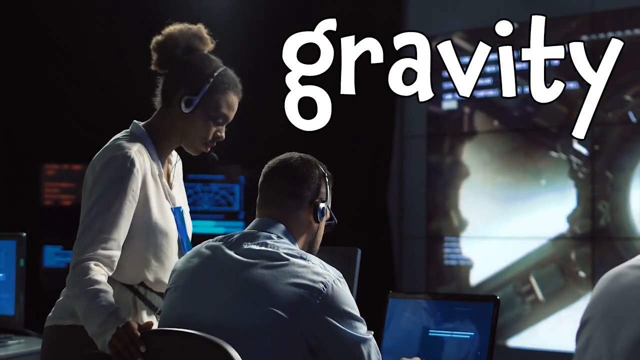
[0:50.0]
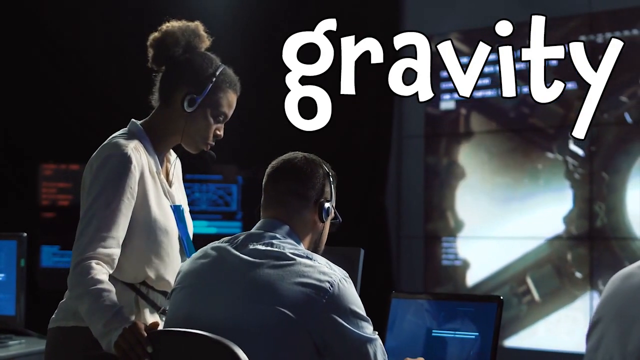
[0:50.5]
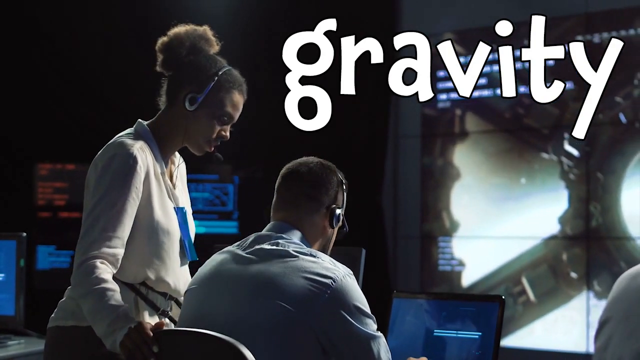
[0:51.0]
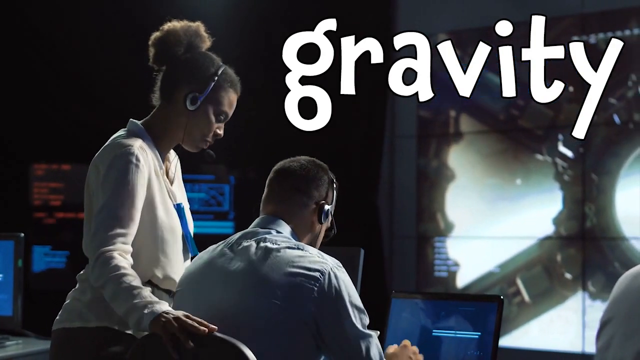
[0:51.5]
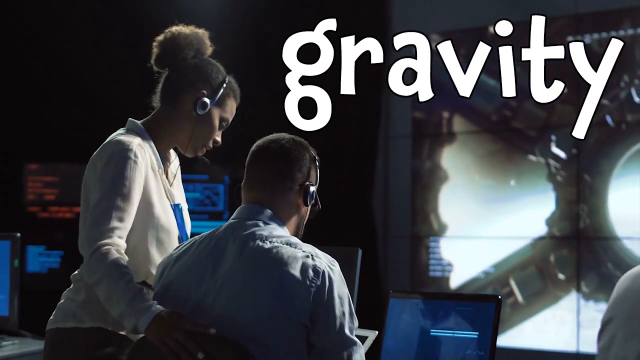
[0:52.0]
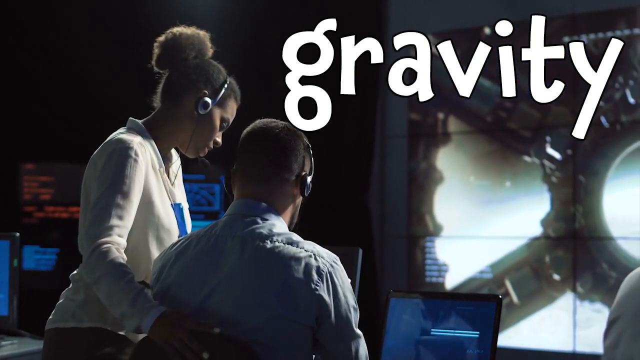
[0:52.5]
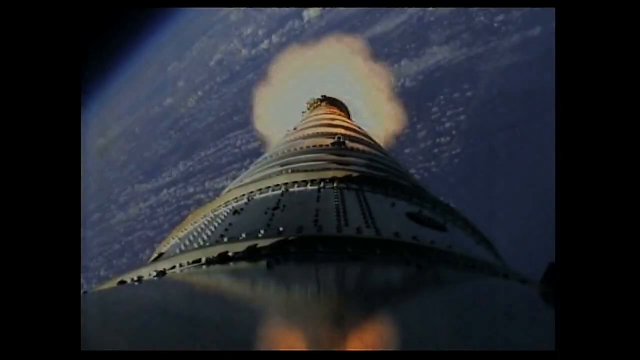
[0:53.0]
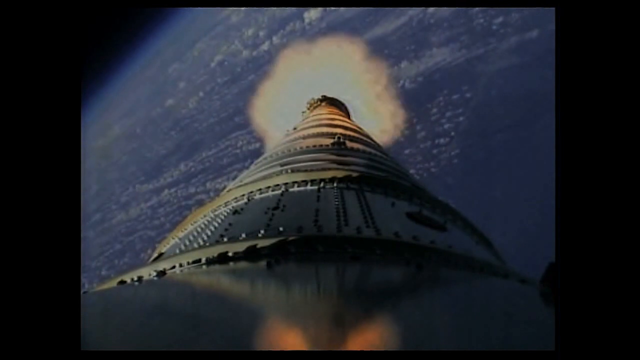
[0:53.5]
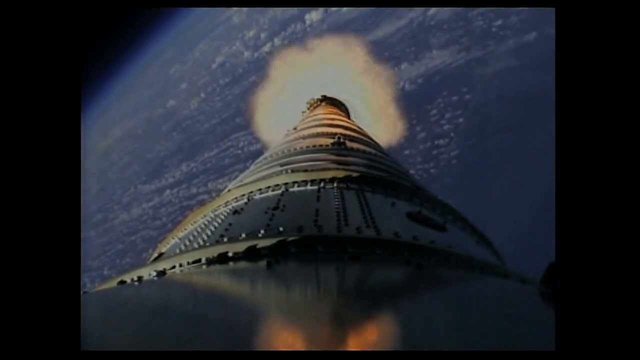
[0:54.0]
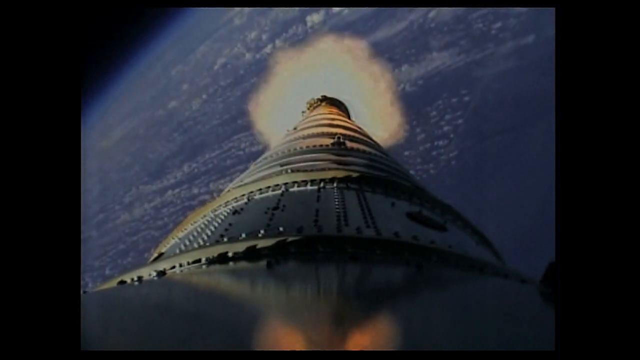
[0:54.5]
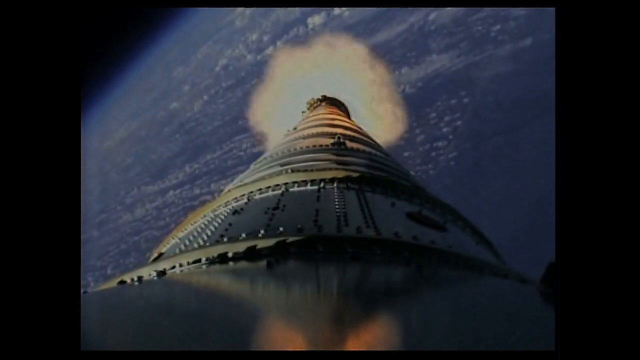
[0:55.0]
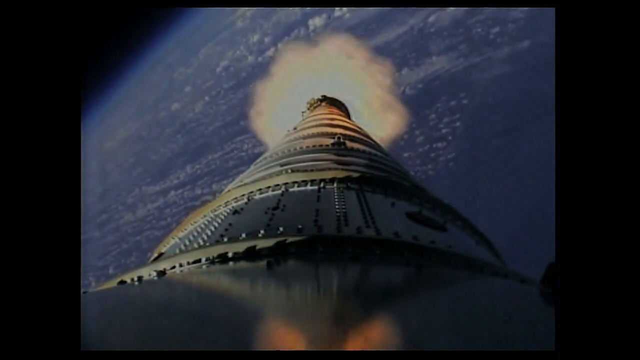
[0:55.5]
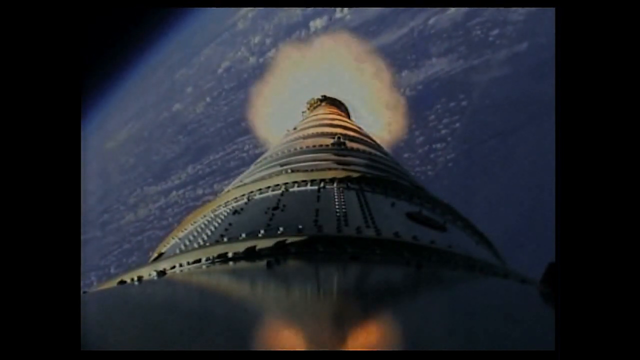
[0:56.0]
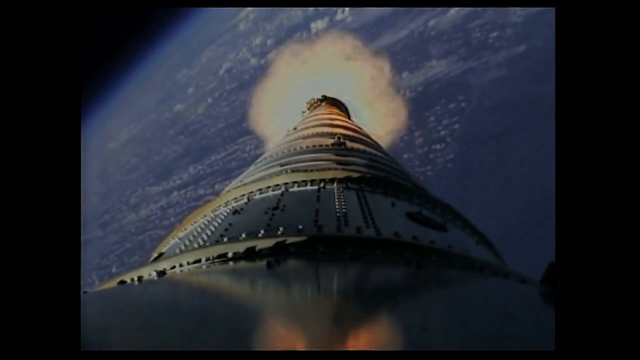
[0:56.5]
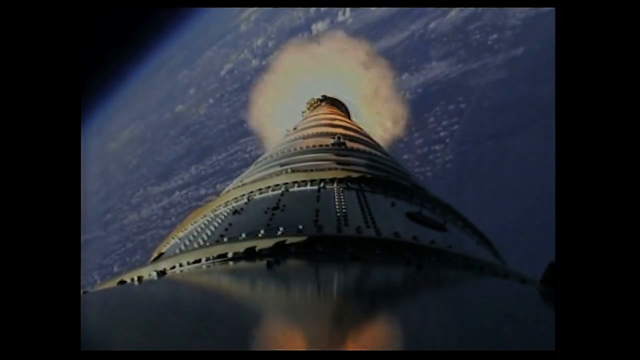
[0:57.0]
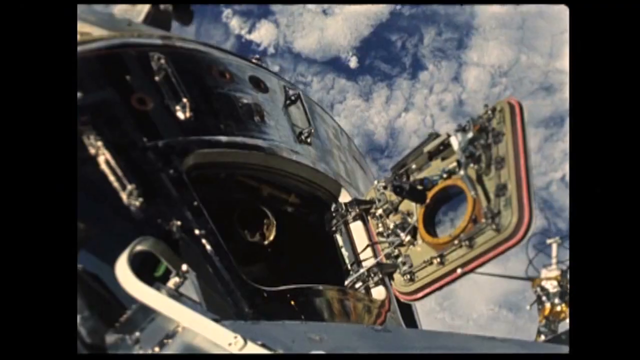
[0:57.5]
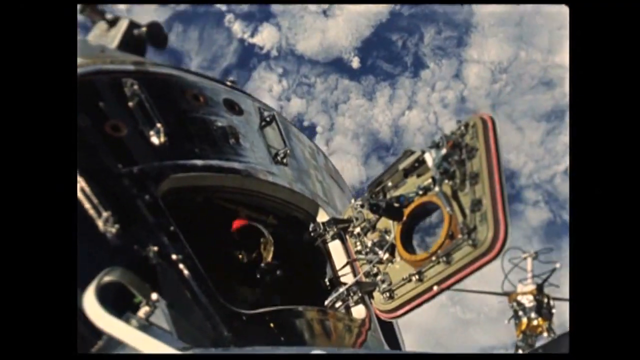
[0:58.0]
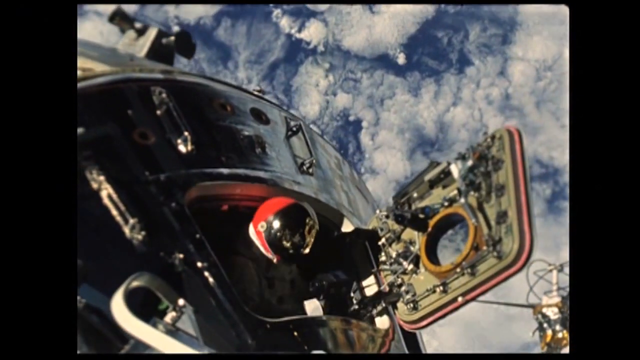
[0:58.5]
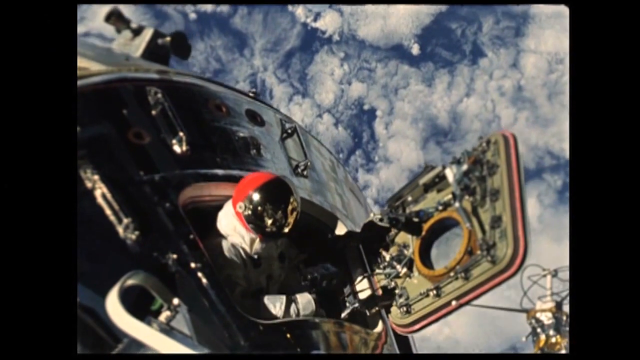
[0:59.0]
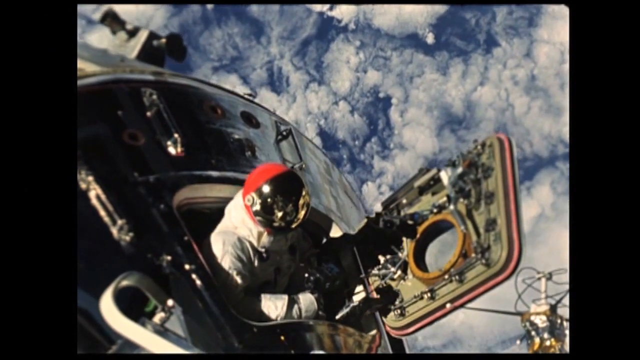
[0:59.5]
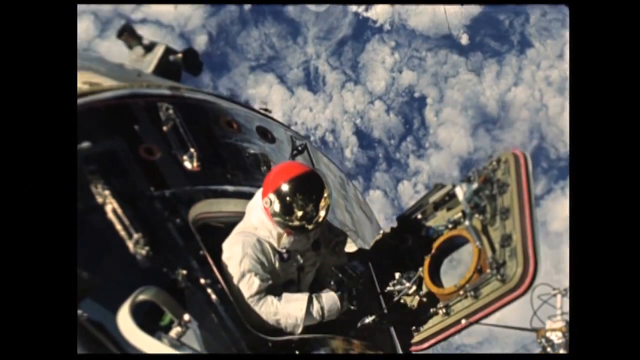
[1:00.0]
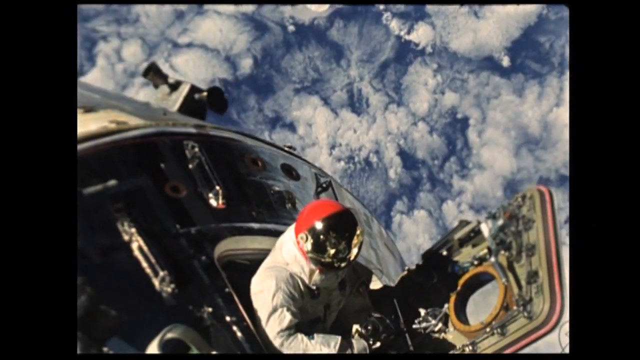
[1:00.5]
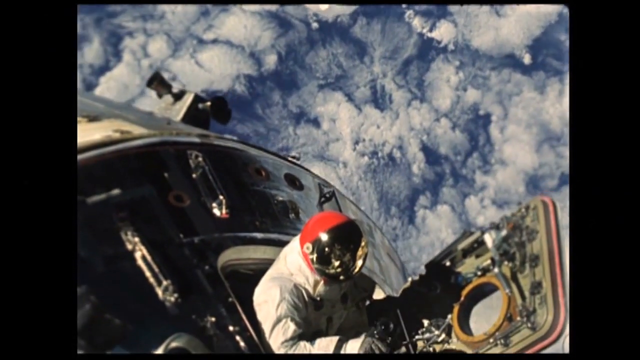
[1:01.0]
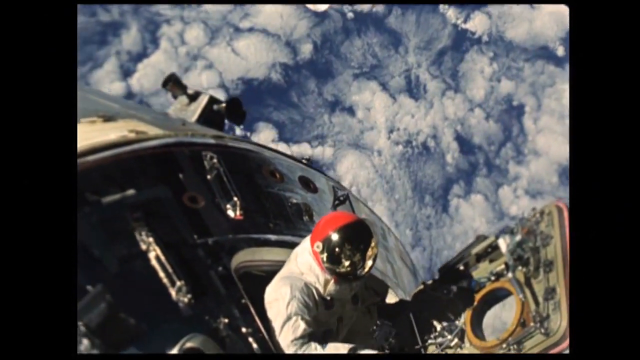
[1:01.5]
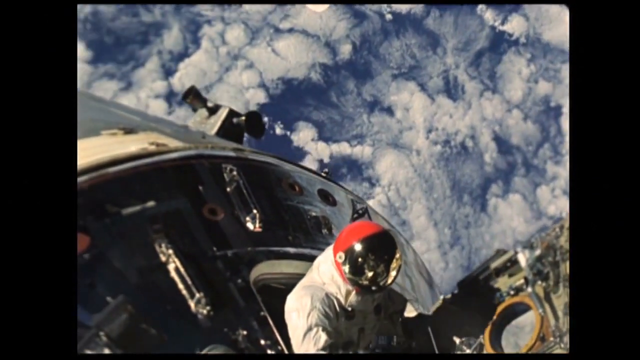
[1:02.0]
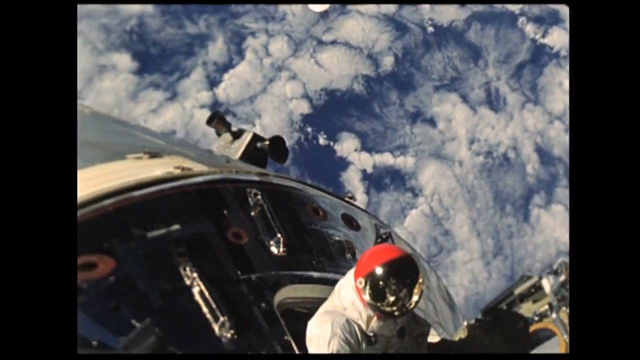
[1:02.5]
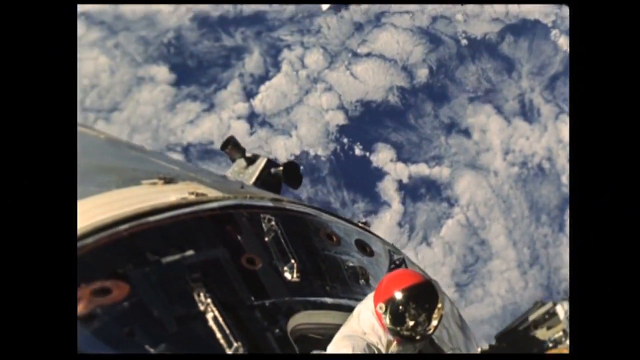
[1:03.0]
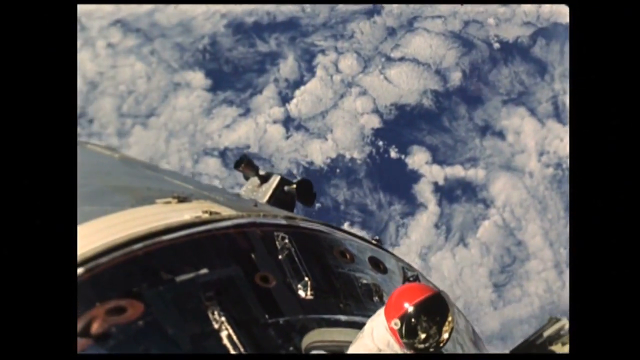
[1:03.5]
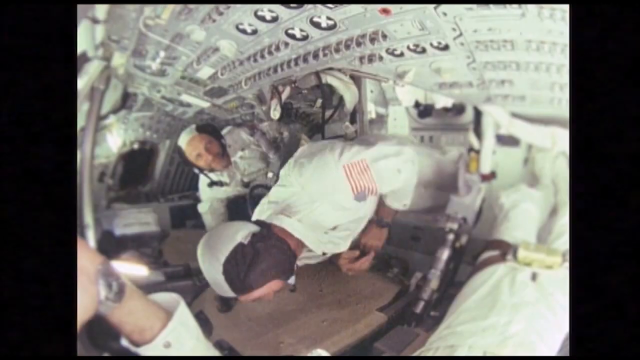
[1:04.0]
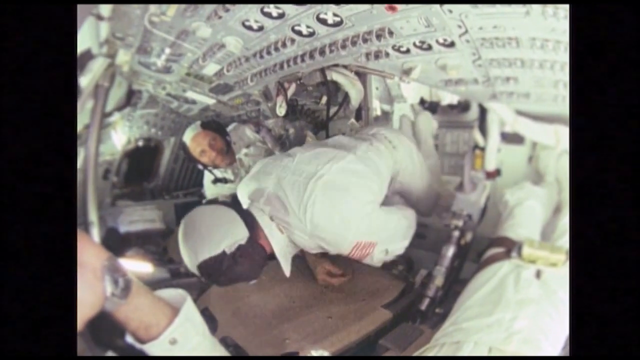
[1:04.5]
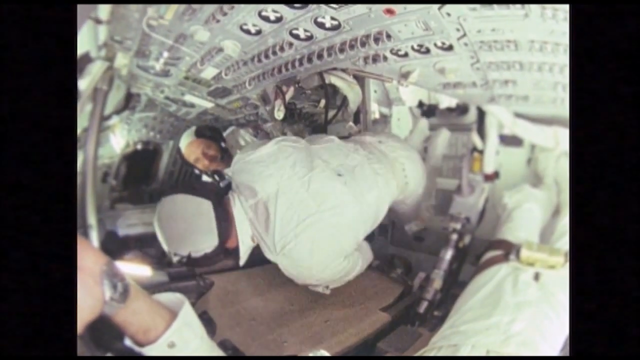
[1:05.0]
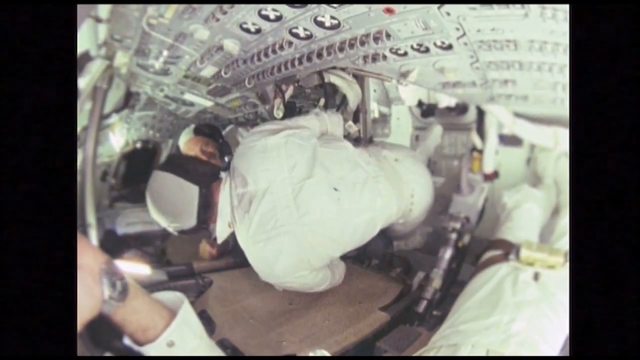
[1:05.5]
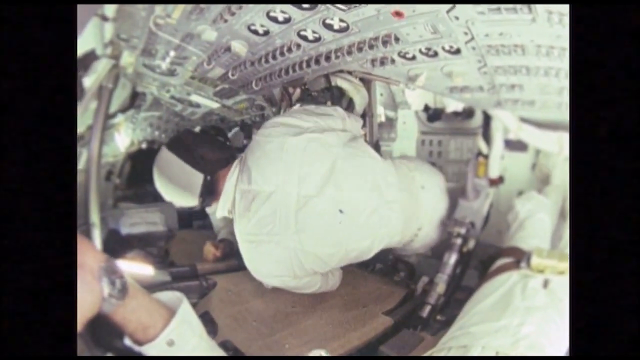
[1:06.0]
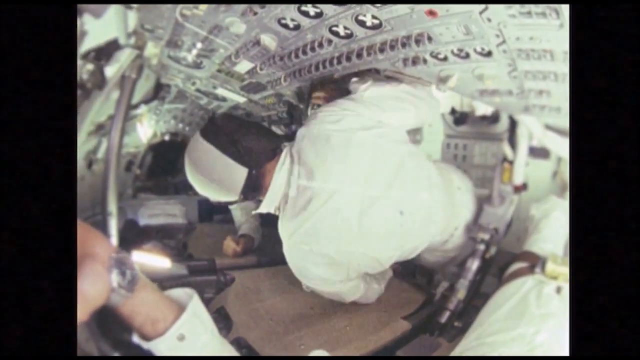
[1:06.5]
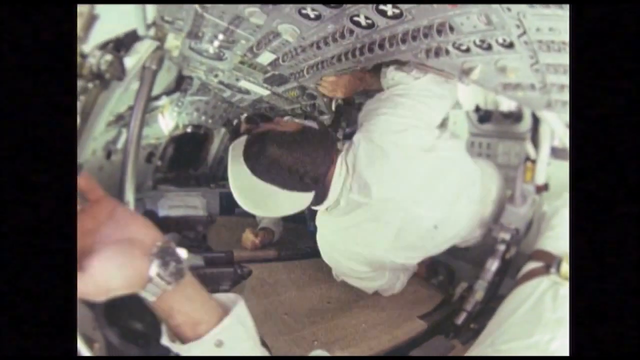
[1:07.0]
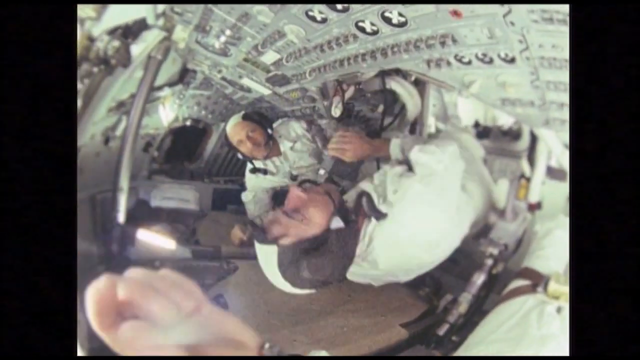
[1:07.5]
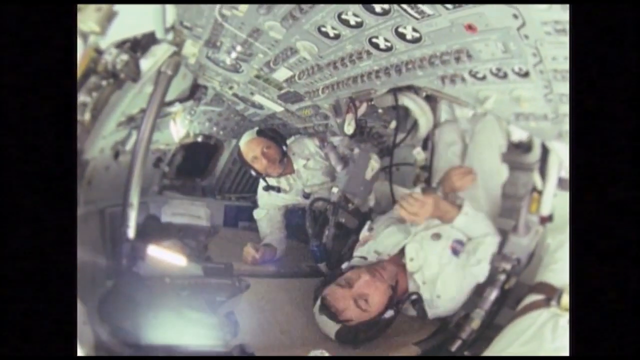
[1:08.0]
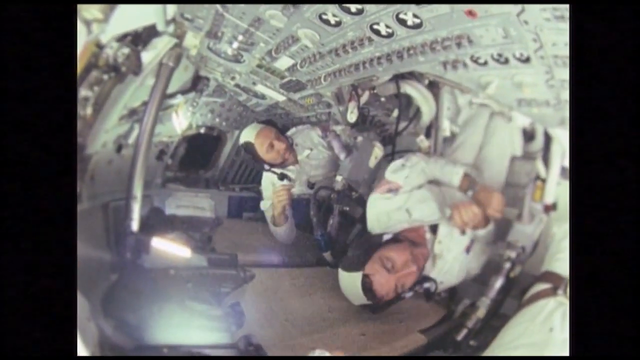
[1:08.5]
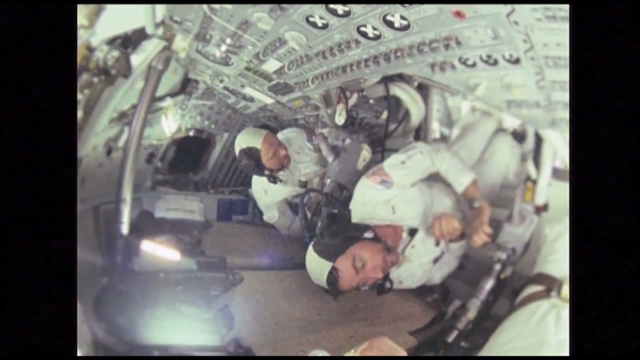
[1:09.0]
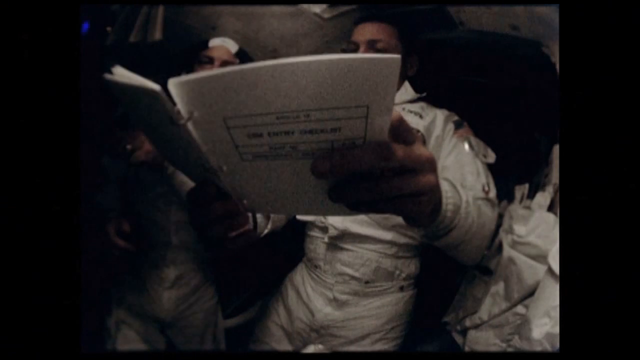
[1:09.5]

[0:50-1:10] The man and the woman are talking, and the view kind of pans over to the screen. It shows part of a spaceship, then changes to what seems like a wing of the spaceship, with fire or something coming out of one end as it kind of flies away from or toward the camera. The image does not cover the full rectangle of the video; it is kind of a square that would fit old-style TVs, with the earth in the background. It then cuts to a spaceship door opening, with an astronaut at the edge under the door, his head out, wearing a red helmet. Inside the spacecraft, two astronauts are kind of floating around; one is kind of sitting and adjusting his position, floating around as he does. Inside the spaceship are many different buttons, like a cockpit of the ship or something.